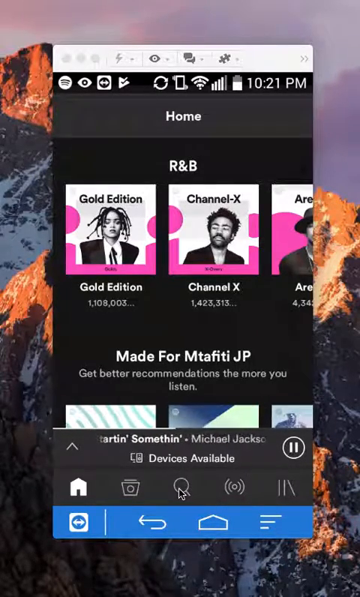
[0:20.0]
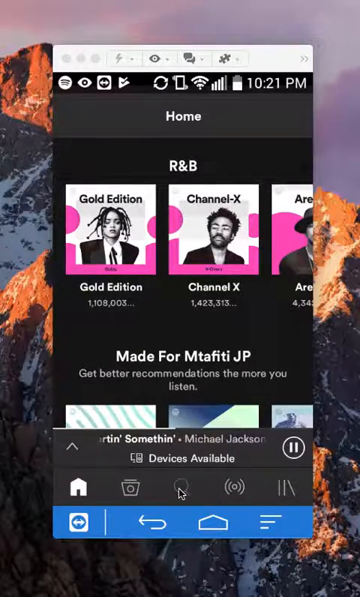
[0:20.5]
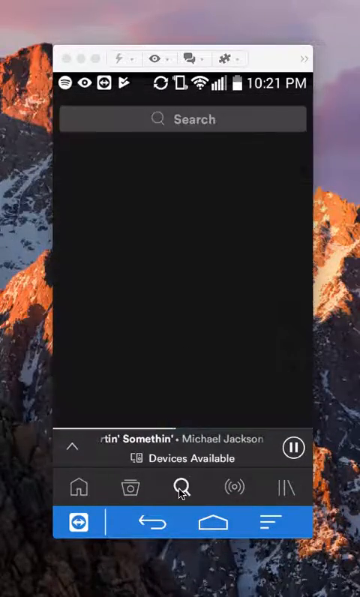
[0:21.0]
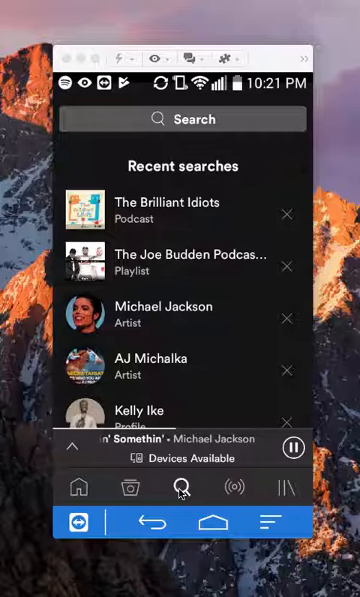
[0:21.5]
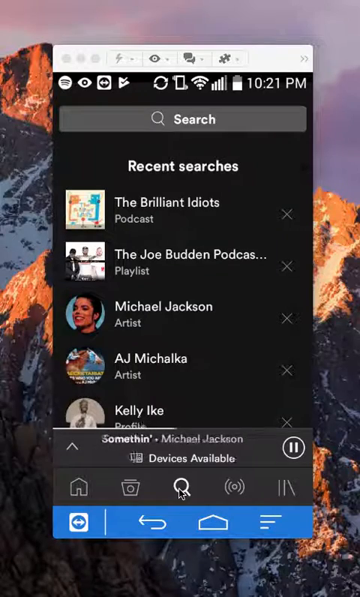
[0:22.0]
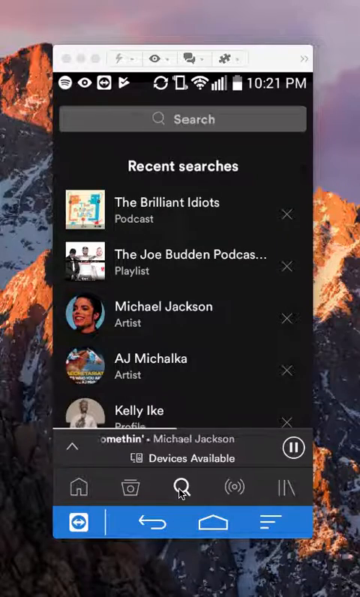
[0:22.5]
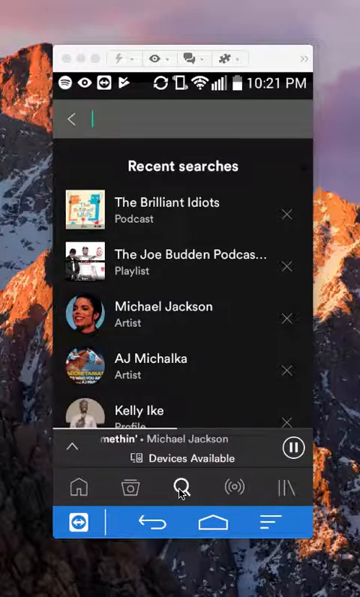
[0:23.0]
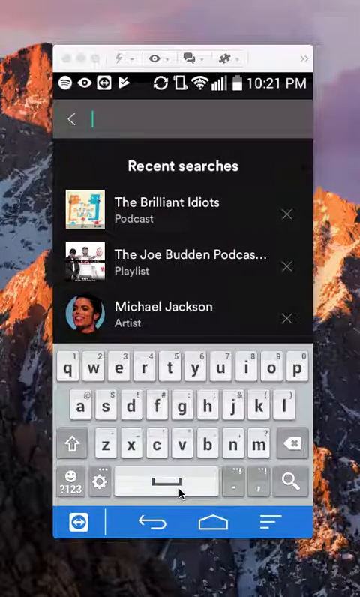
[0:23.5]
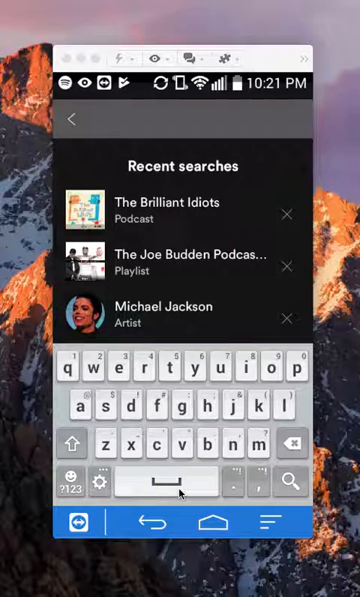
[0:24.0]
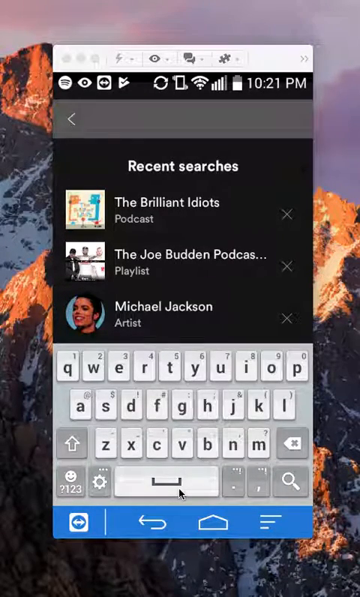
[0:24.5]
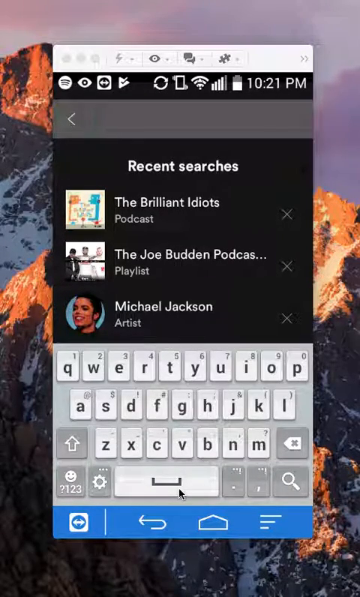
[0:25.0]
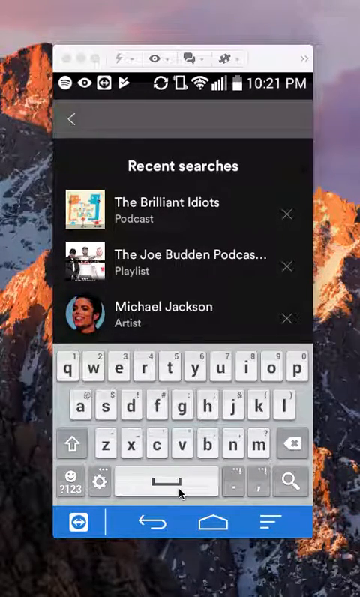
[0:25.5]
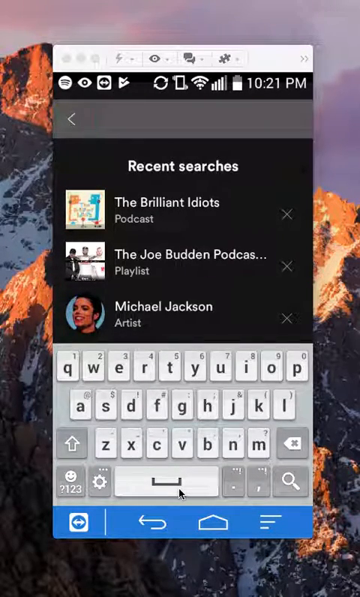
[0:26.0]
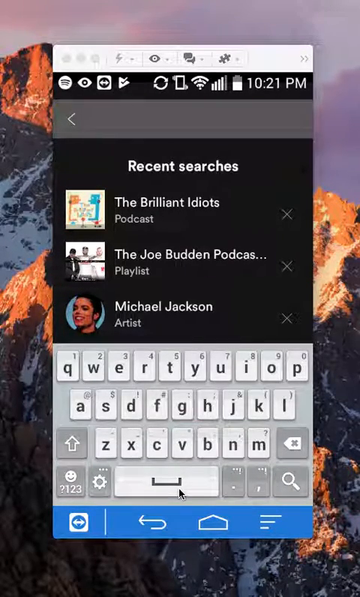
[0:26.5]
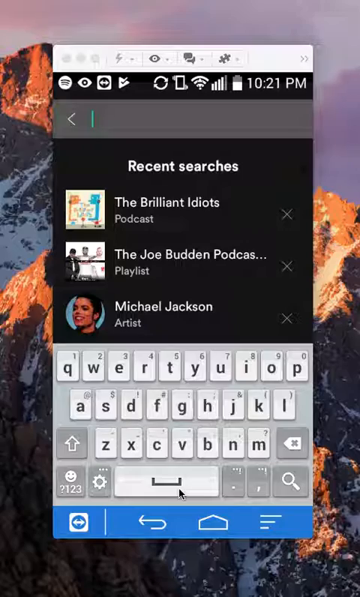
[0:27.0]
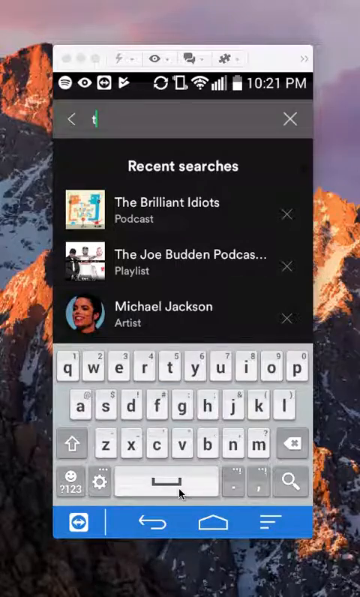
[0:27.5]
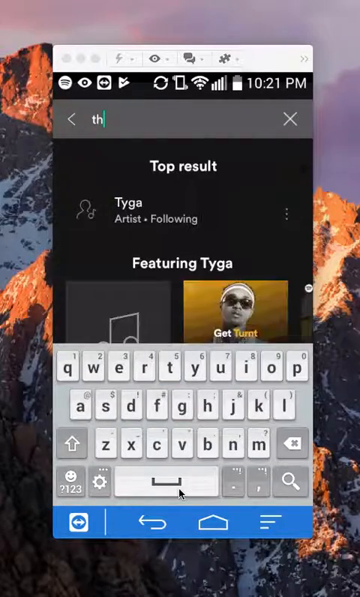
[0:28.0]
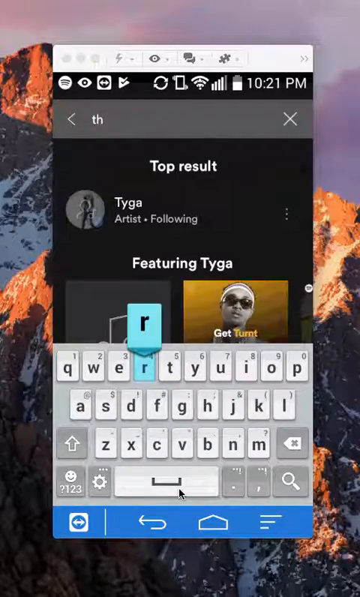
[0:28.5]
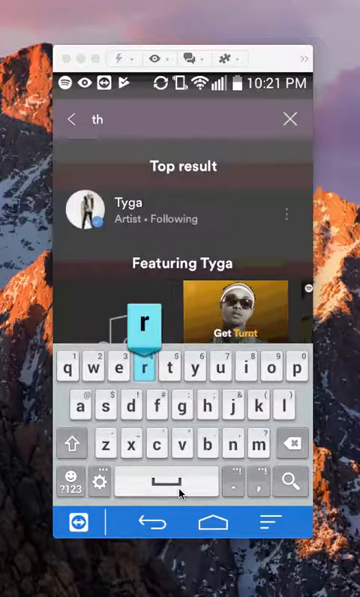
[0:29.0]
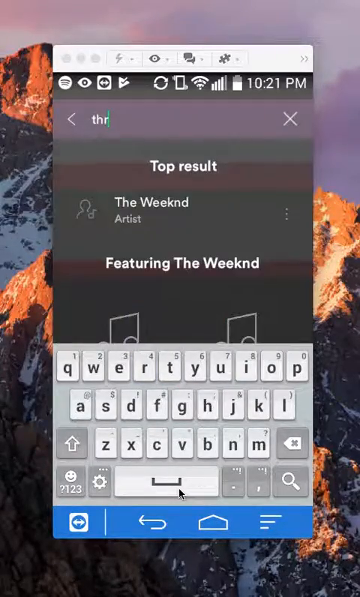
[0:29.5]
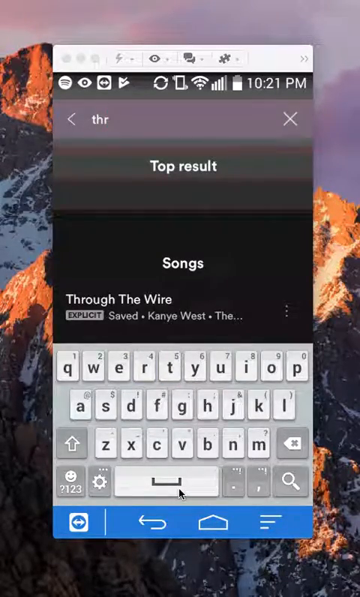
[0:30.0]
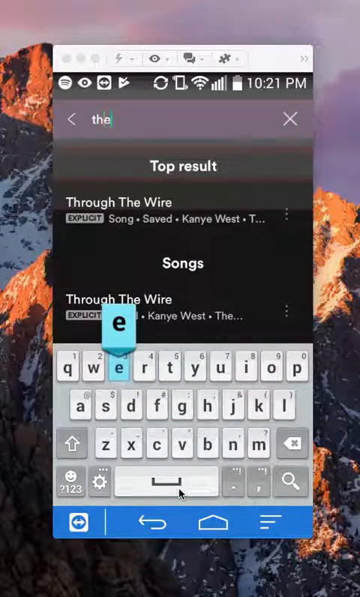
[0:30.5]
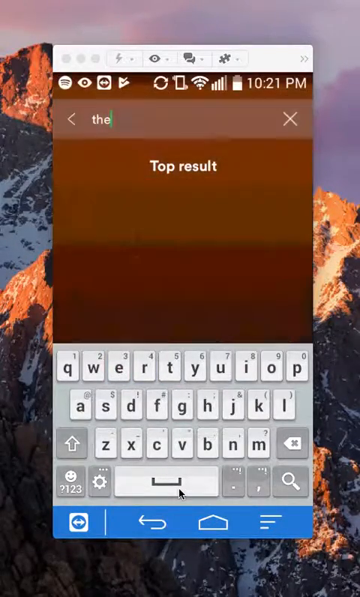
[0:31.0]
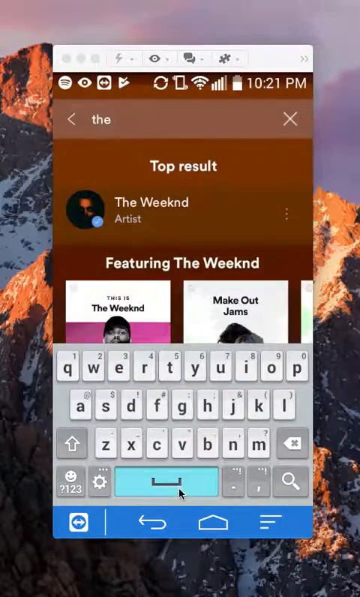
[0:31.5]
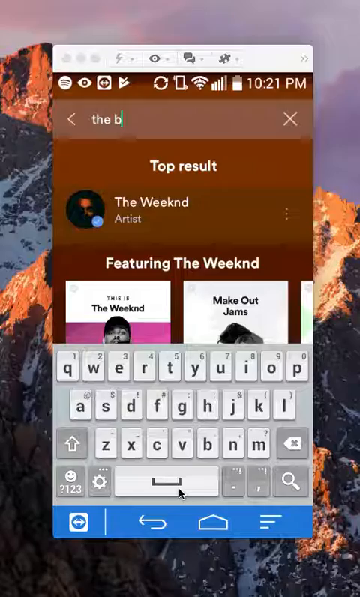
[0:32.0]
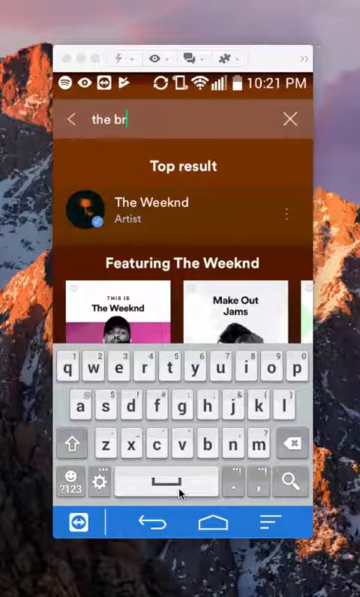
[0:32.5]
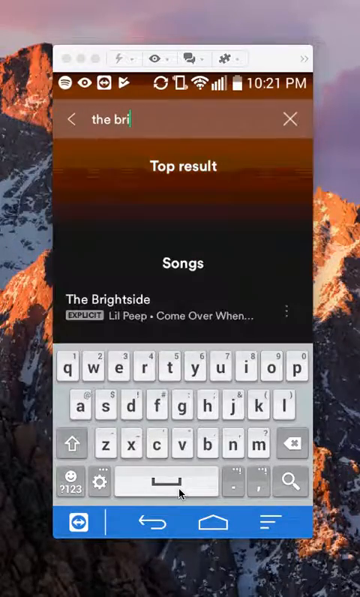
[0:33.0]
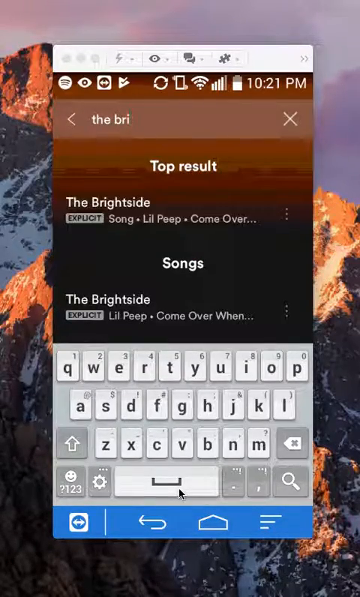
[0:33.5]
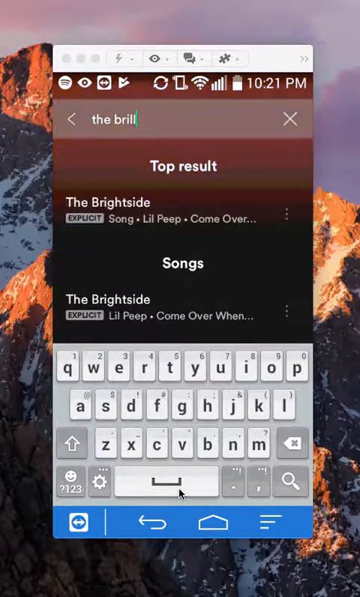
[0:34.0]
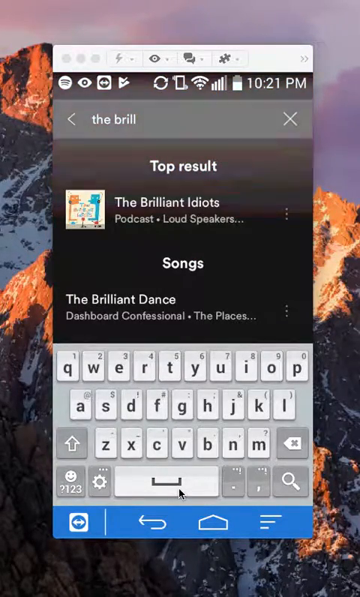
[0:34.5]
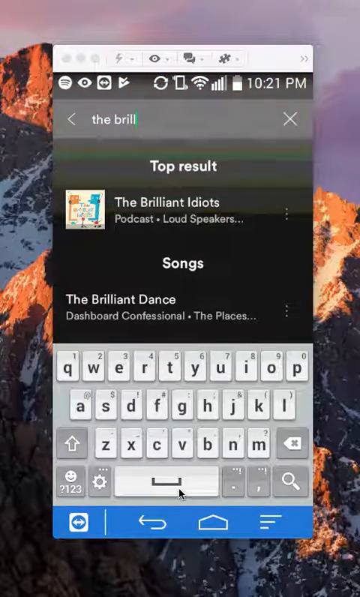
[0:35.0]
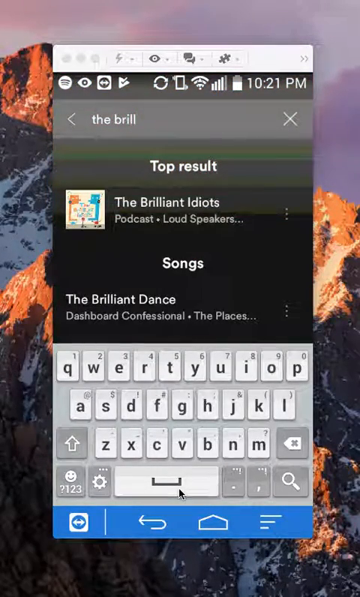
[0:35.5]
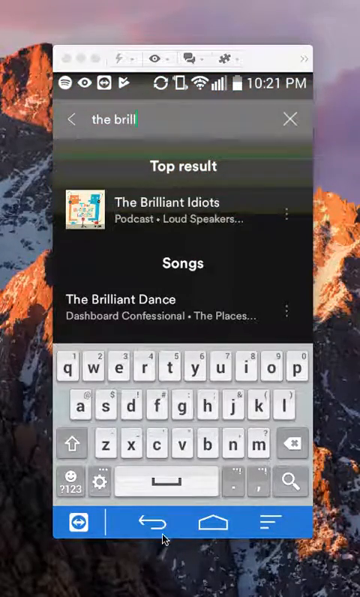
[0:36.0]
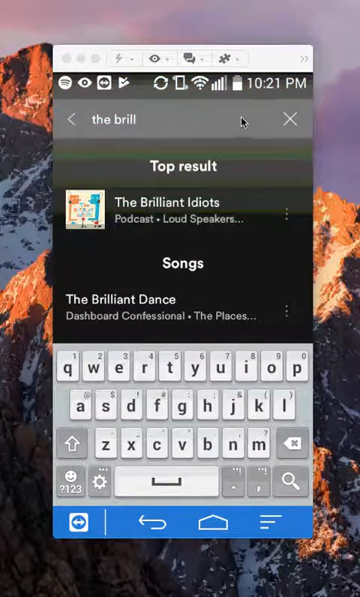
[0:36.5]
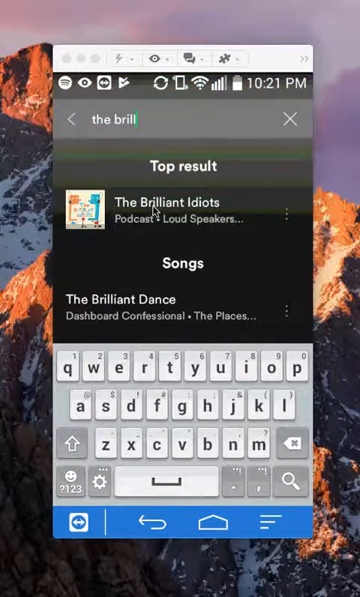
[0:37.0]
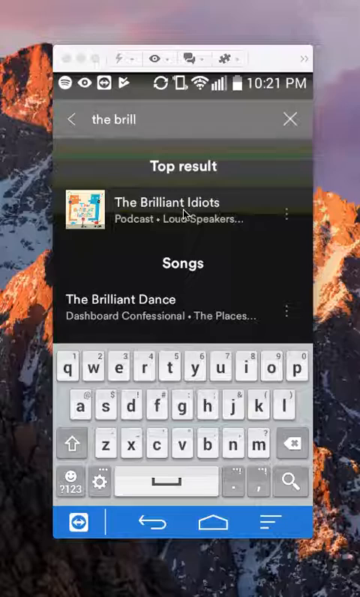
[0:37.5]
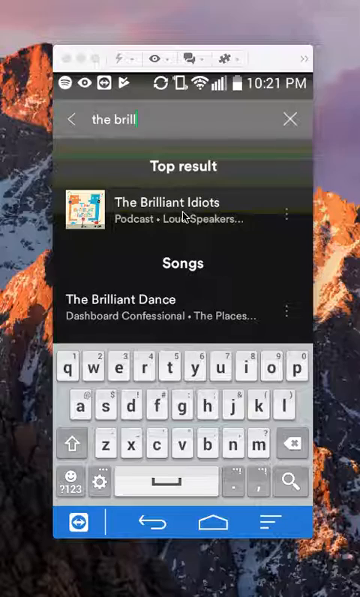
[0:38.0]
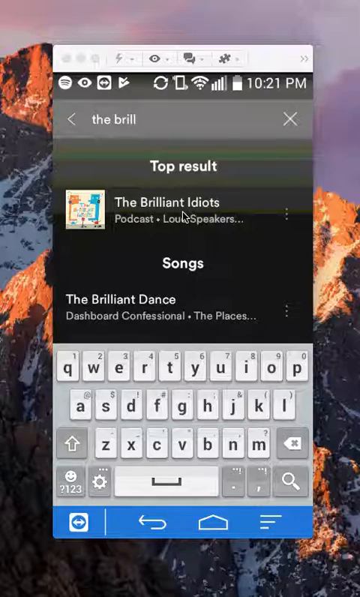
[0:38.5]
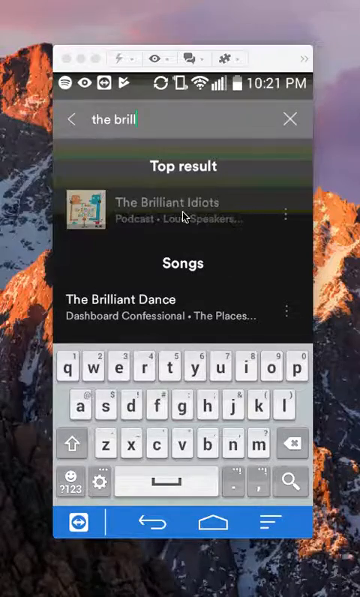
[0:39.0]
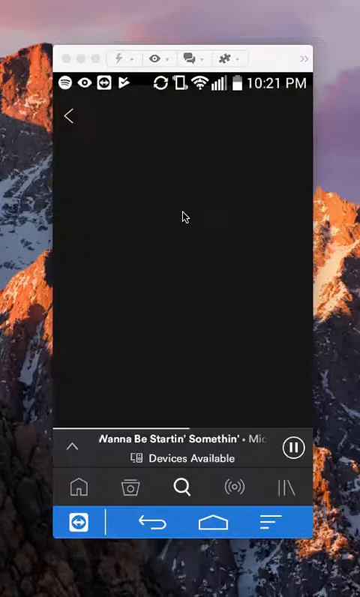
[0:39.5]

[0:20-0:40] A music app's user interface with a dark theme selected is shown. The top section shows an R&B playlist and the bottom a personalized playlist. The top of the browser looks similar to a mobile phone: four white icons on the left side, a Wi-Fi signal bar, a mobile signal bar, a battery and a time. A cursor circles around the search button, then is placed in the middle of the icon and presses it. The interface changes to a recent searches page, where the top three searches are the Brilliant Idiots podcast, the Joe Budden podcast, and the artist Michael Jackson, with his picture next to his name. The search field is empty with a blinking cursor, then the letters T-H-E, a space, and B-R-I-L-L are typed, and the Brilliant Idiots podcast appears as the autocompleted result. The application is overlaid on a background image of a mountainside with sunlight spilling on the rocks.